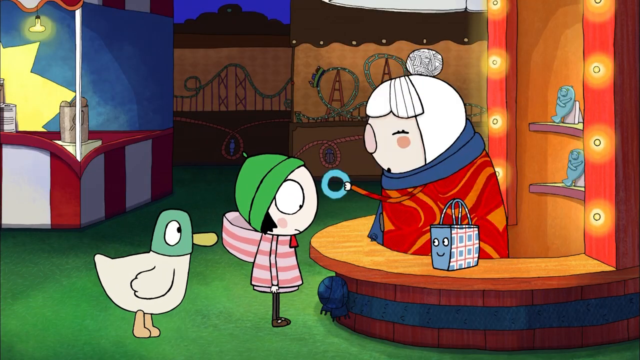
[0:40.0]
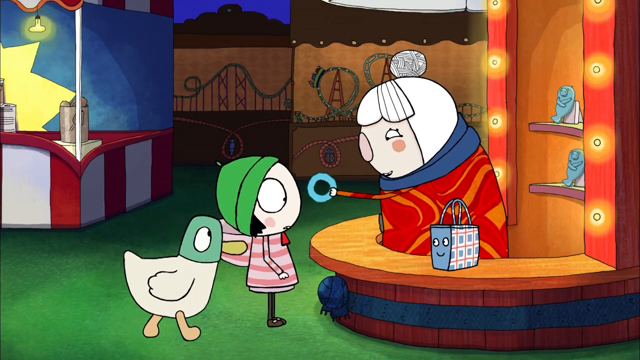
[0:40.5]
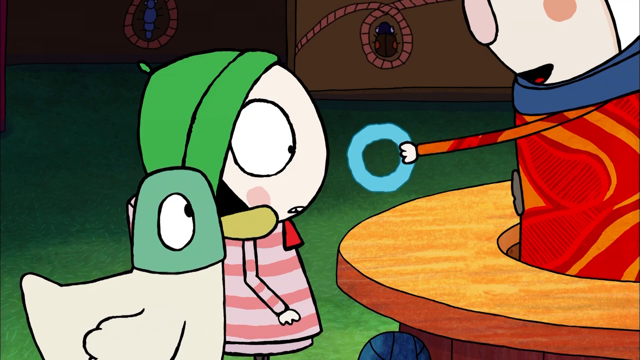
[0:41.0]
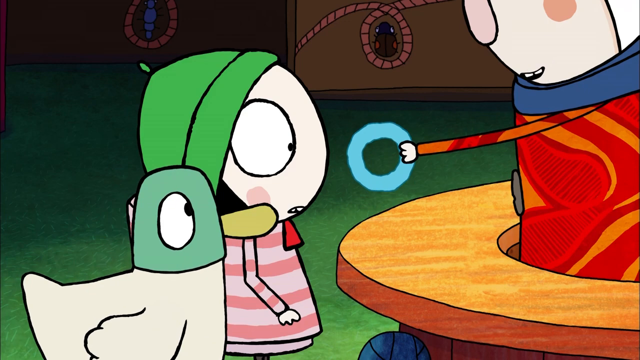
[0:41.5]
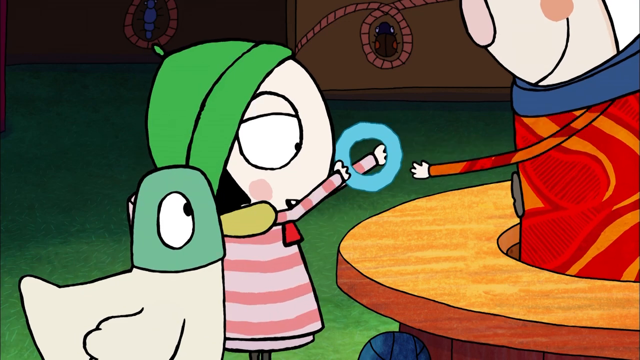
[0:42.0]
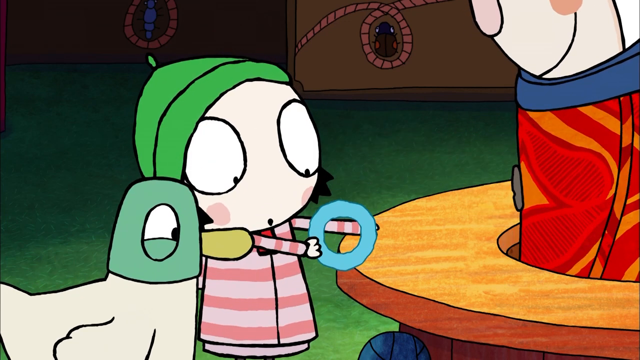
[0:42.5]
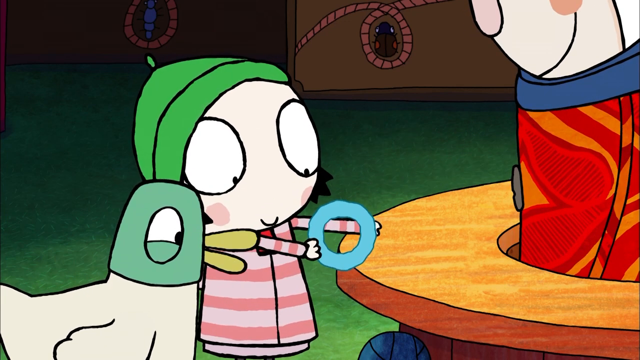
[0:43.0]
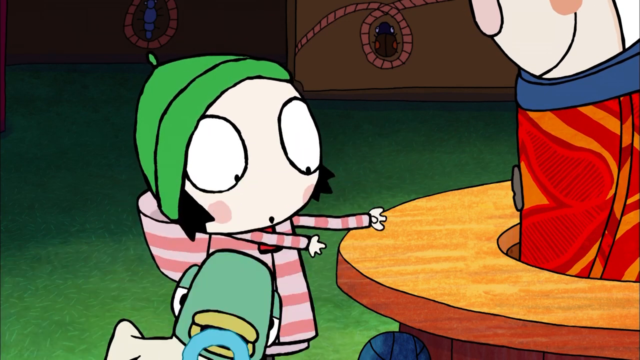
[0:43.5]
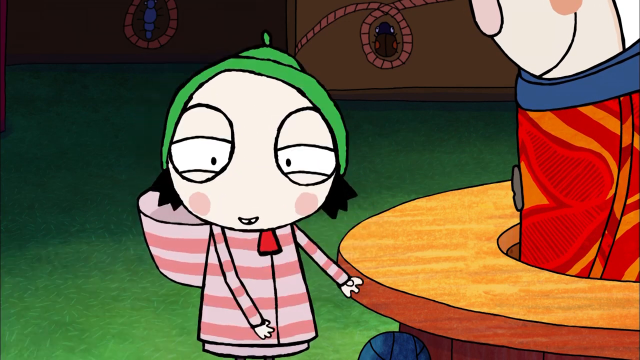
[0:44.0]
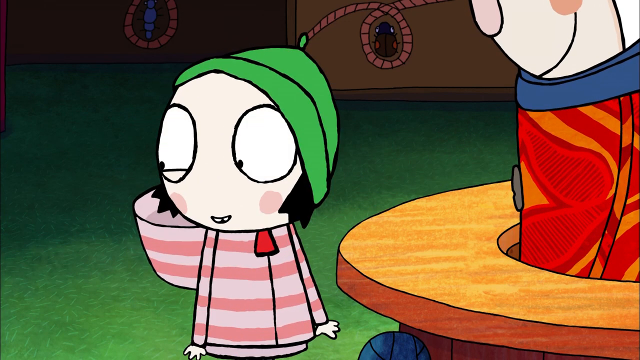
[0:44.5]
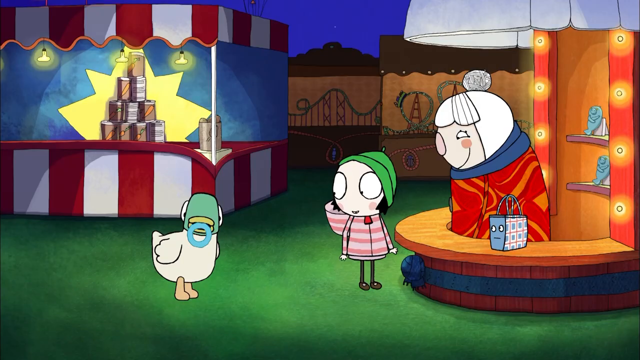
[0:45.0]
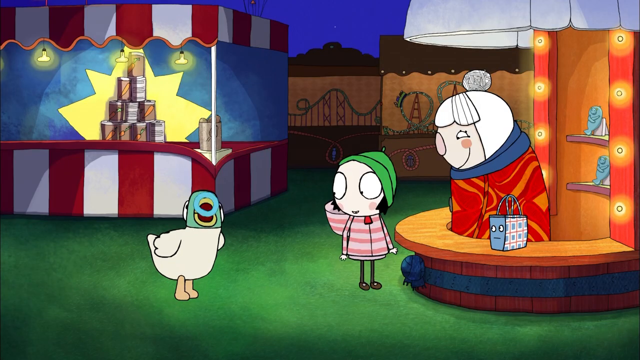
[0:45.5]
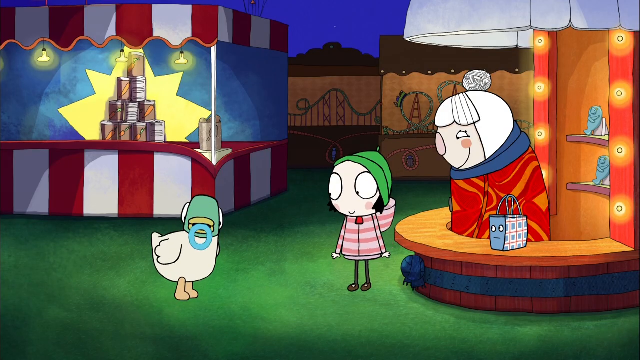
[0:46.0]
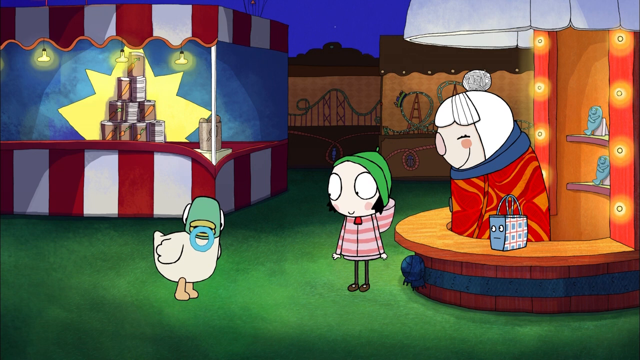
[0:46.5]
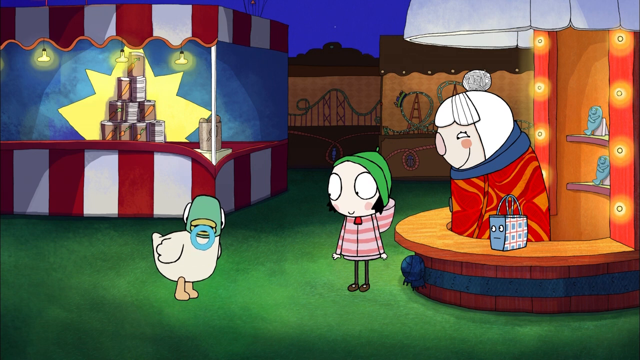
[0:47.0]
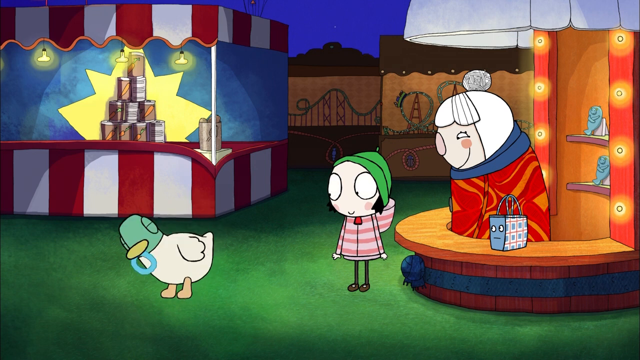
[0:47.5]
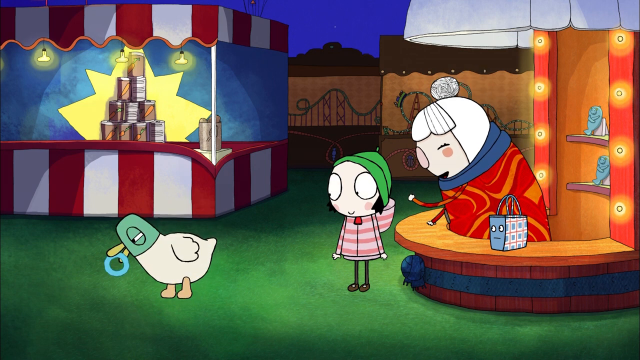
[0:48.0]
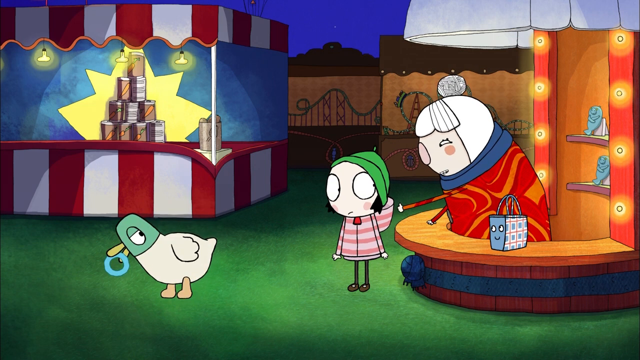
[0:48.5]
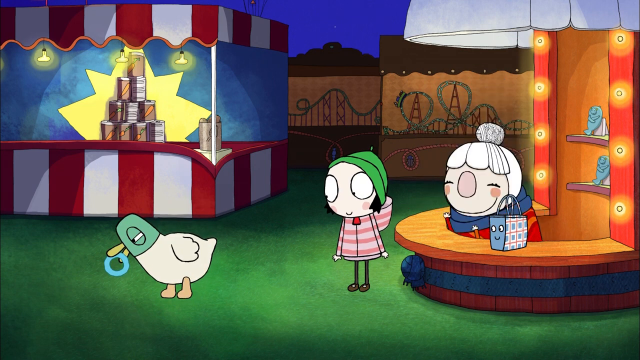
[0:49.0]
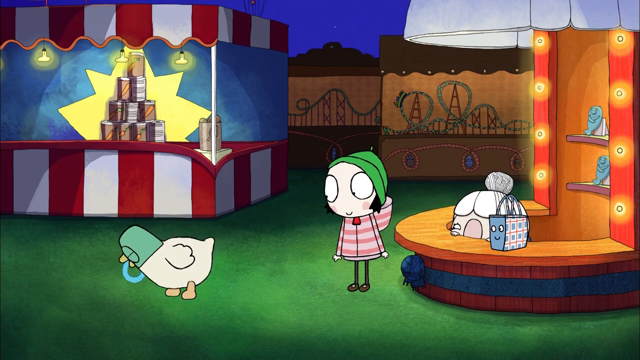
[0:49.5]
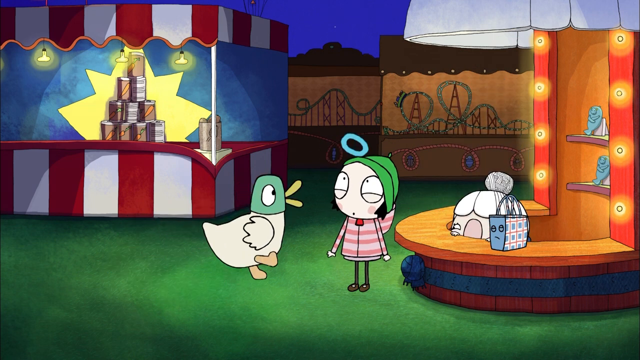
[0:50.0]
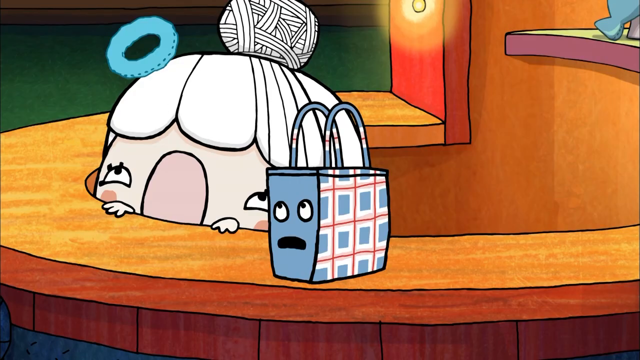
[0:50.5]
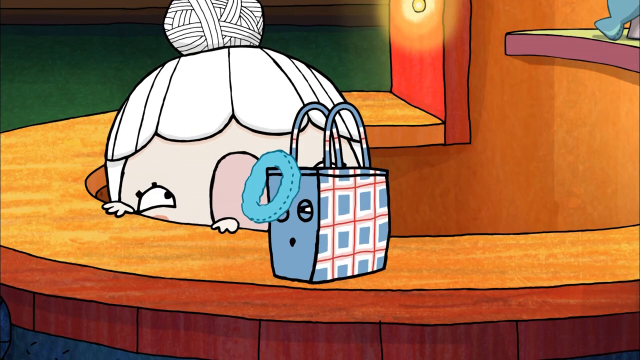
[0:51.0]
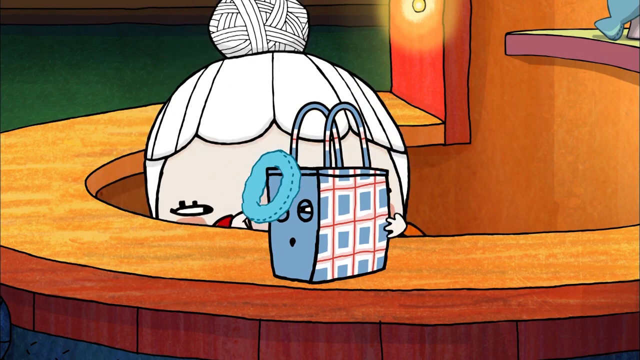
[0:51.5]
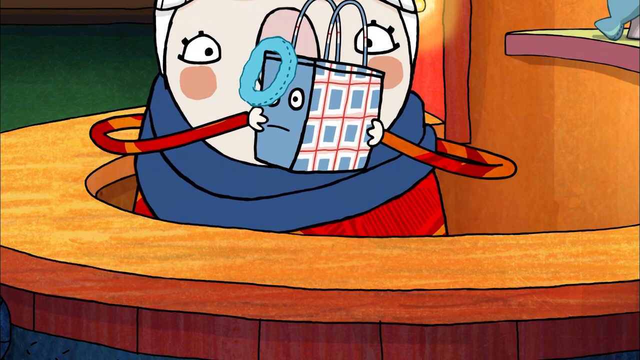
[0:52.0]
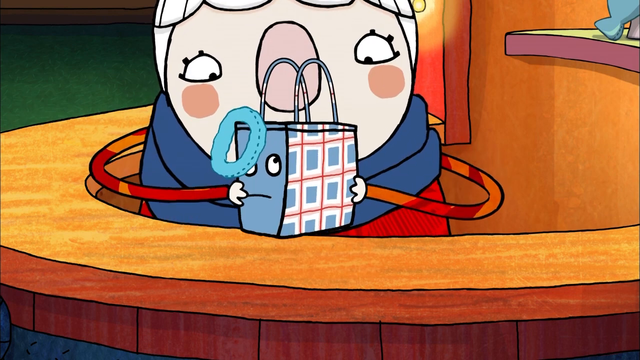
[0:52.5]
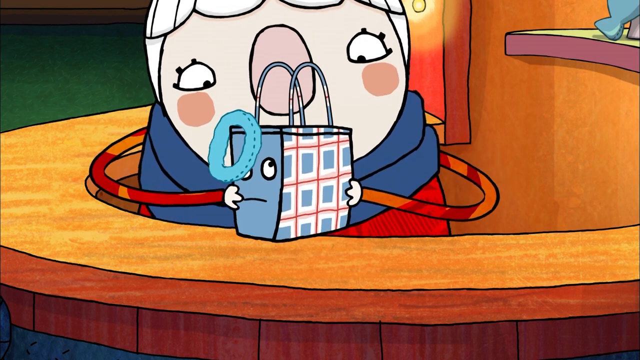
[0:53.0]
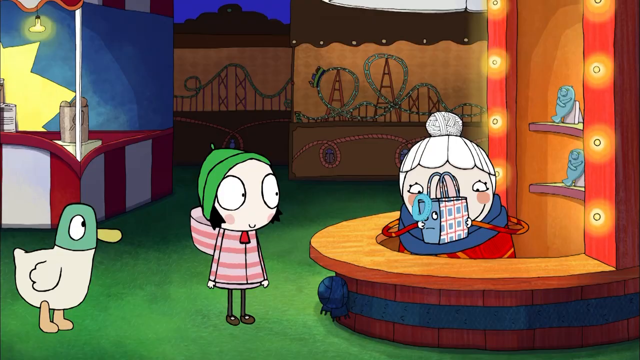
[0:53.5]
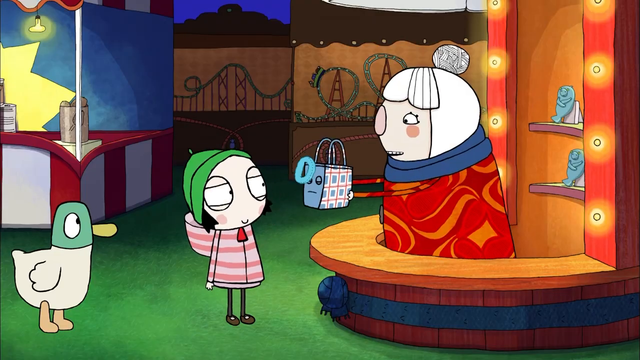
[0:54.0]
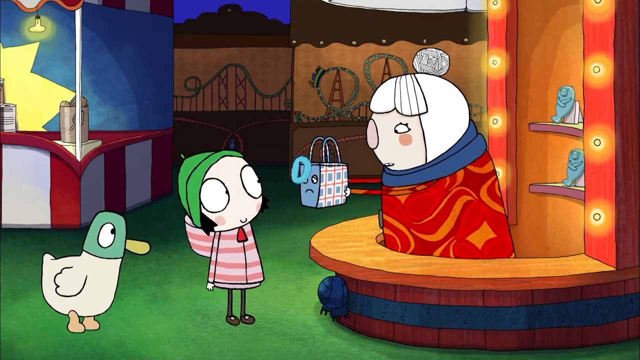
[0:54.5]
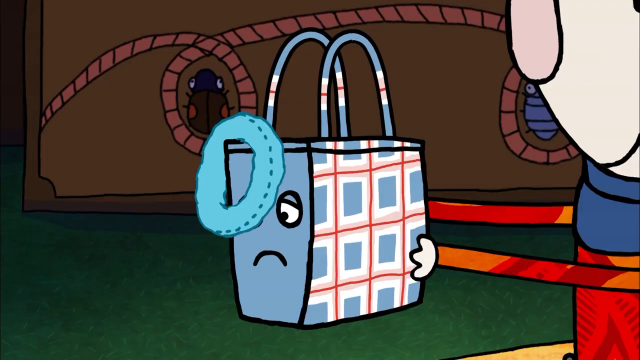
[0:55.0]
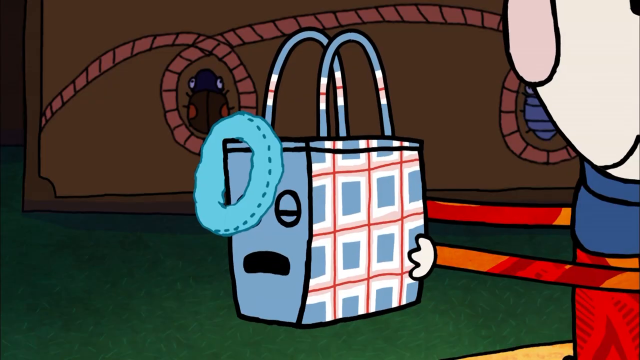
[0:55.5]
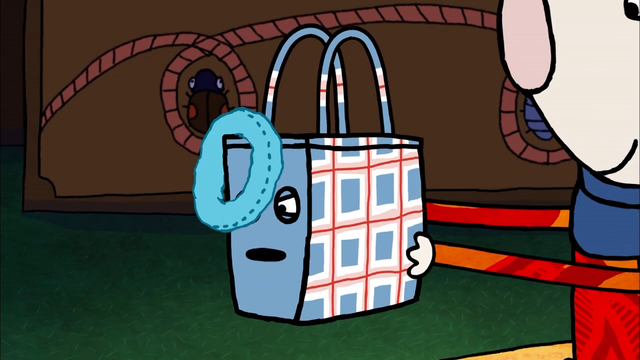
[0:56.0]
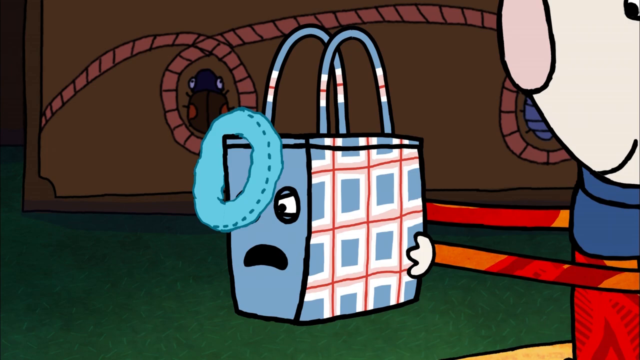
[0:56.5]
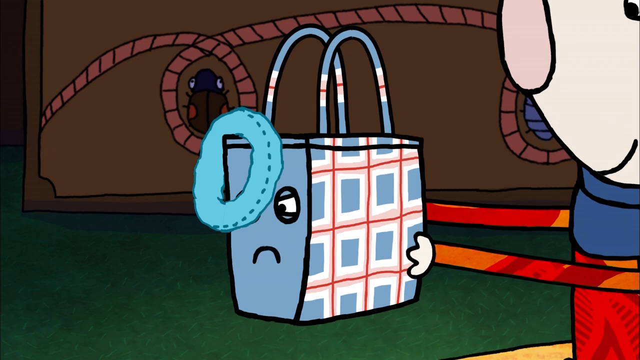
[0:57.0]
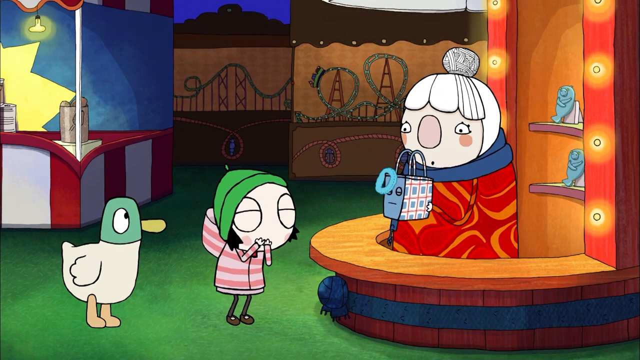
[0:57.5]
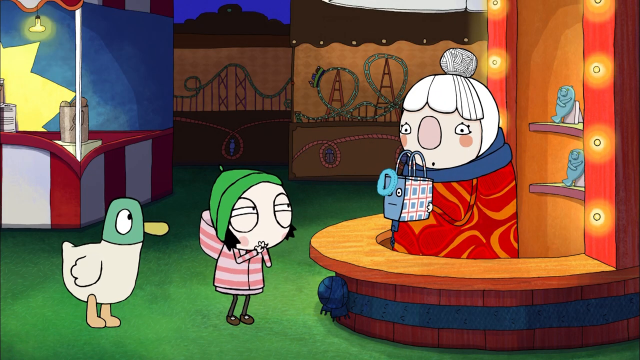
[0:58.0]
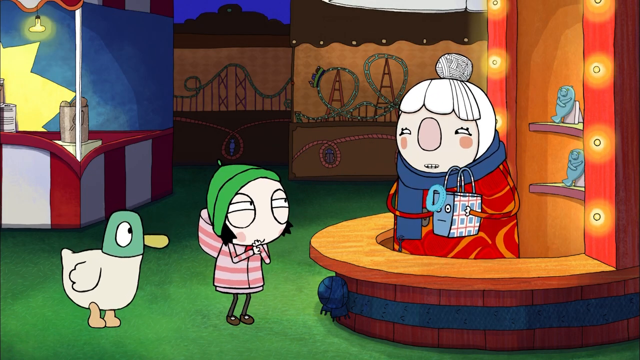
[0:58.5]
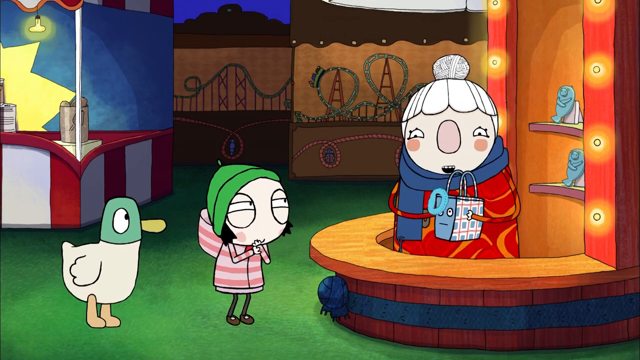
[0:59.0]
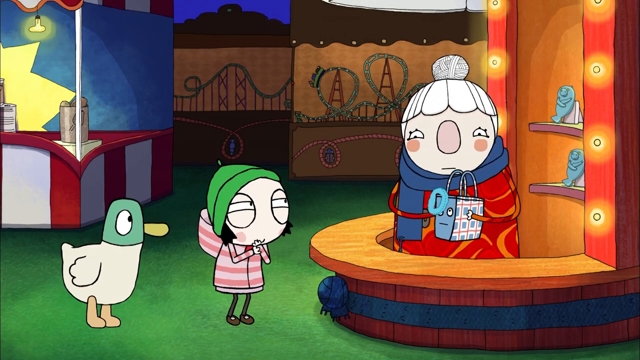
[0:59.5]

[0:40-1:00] The dog catches something in its mouth and swallows it a little while the little girl watches, perplexed. The dog then throws the wrist bangle back at the seller. The girl seems to smile, and the seller puts the bangle in the little girl's face. The dog, behind the girl, also seems happy. It looks like it is night; the other stalls look a bit empty, but there still seem to be a few people at the circus.